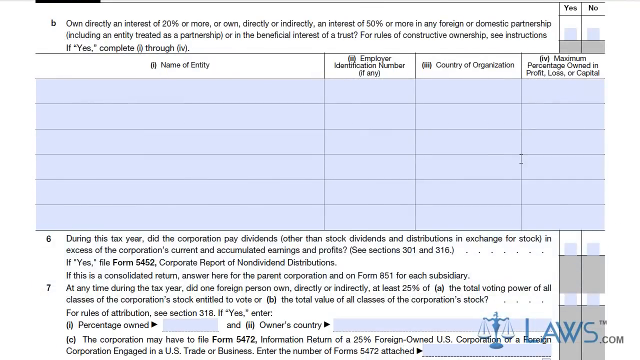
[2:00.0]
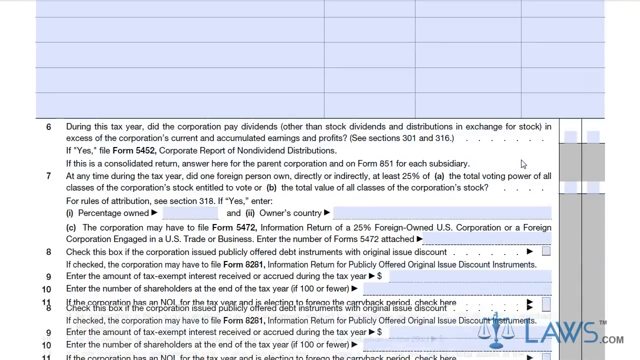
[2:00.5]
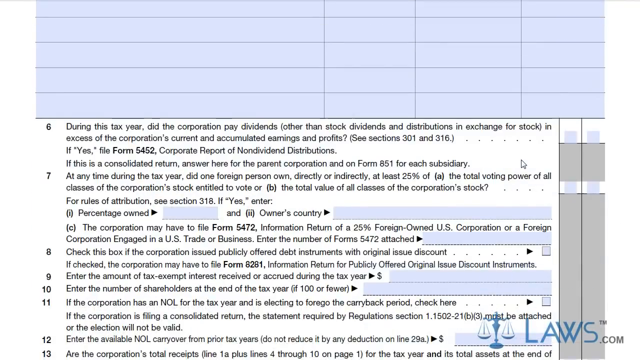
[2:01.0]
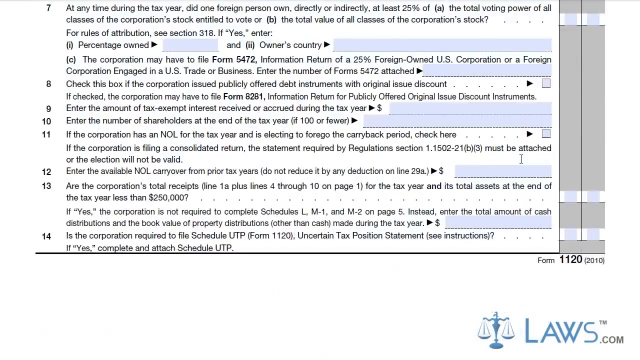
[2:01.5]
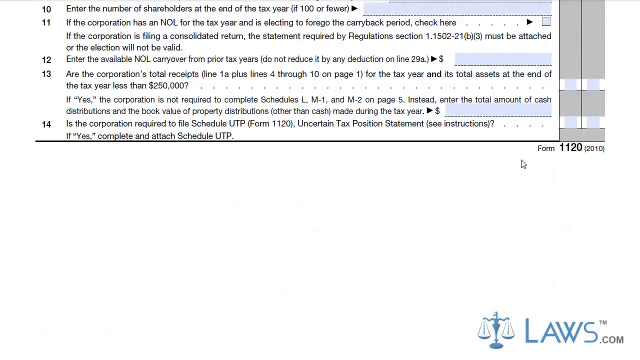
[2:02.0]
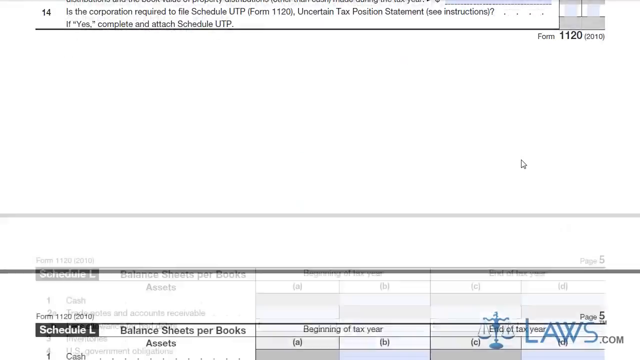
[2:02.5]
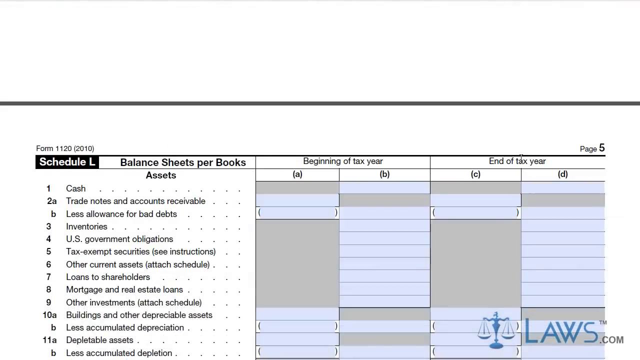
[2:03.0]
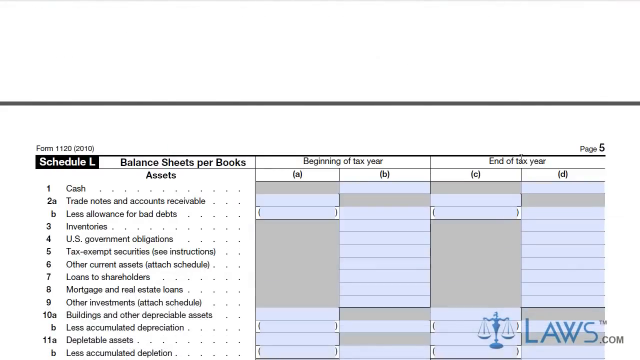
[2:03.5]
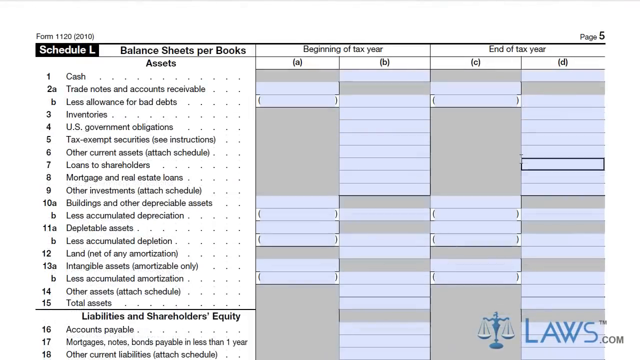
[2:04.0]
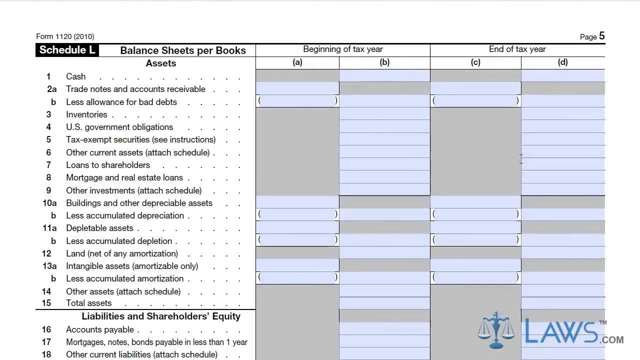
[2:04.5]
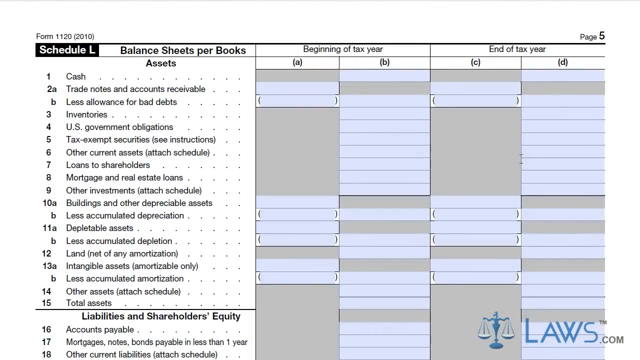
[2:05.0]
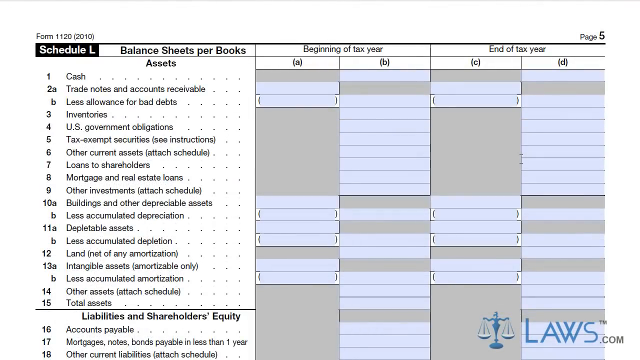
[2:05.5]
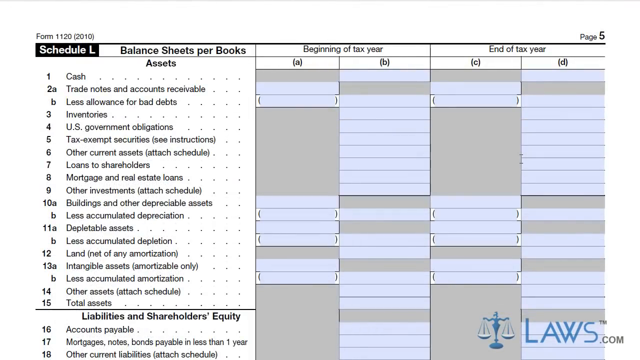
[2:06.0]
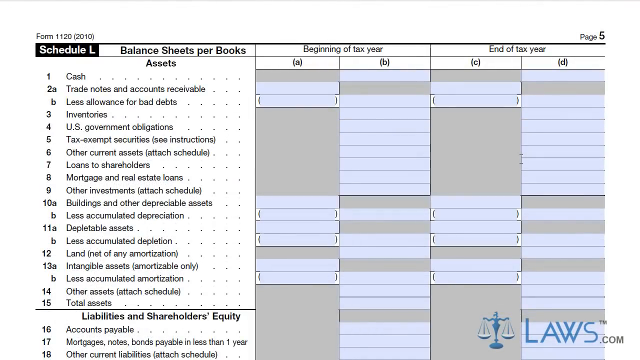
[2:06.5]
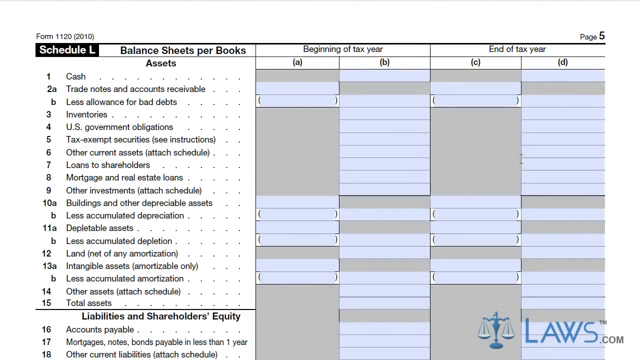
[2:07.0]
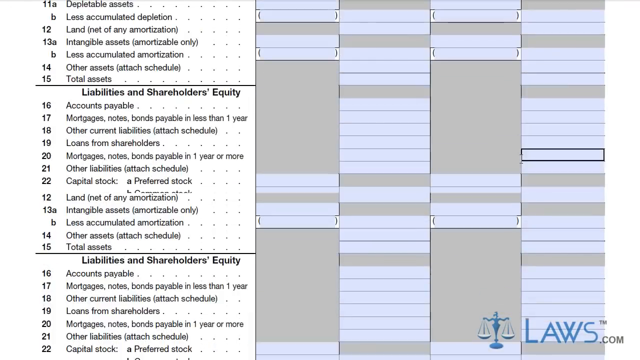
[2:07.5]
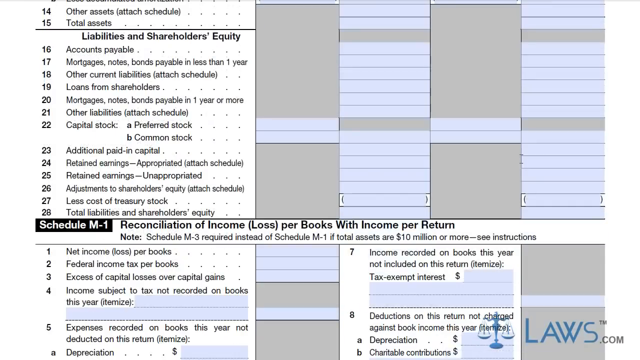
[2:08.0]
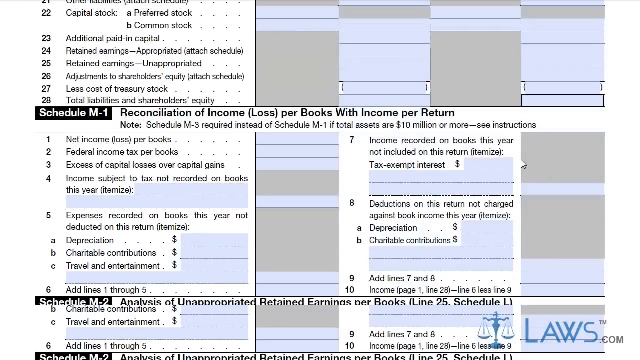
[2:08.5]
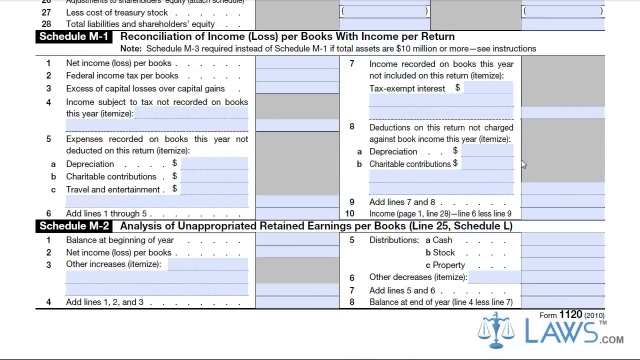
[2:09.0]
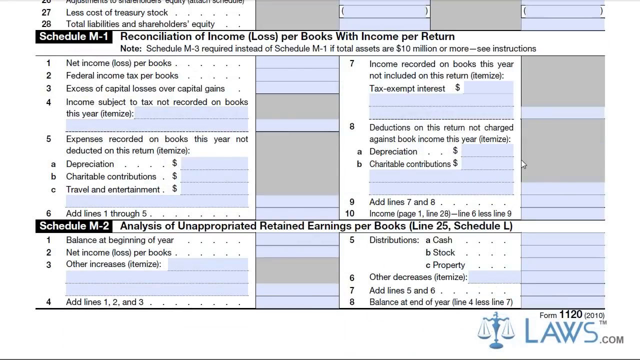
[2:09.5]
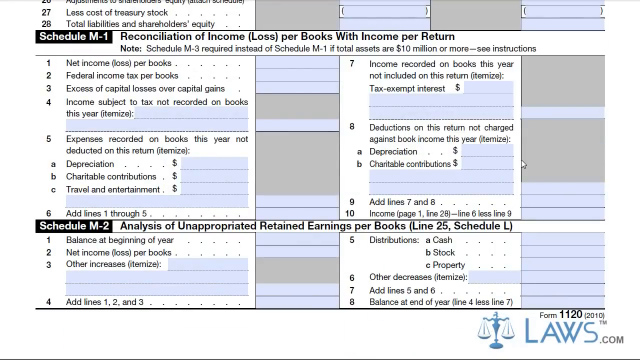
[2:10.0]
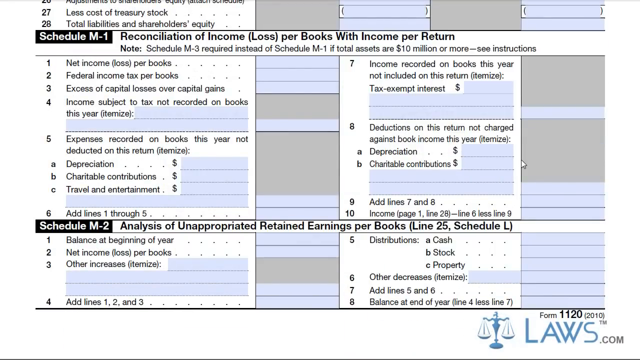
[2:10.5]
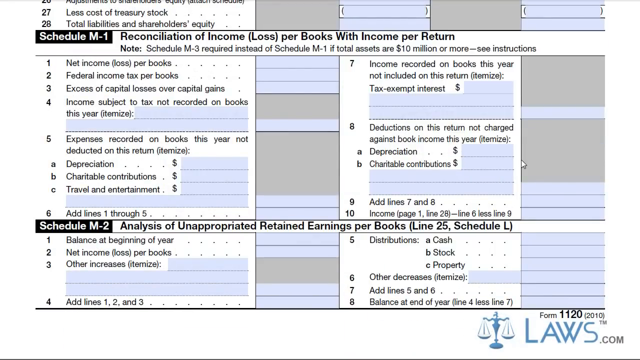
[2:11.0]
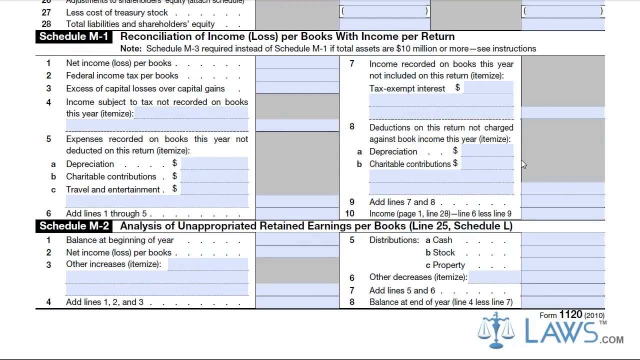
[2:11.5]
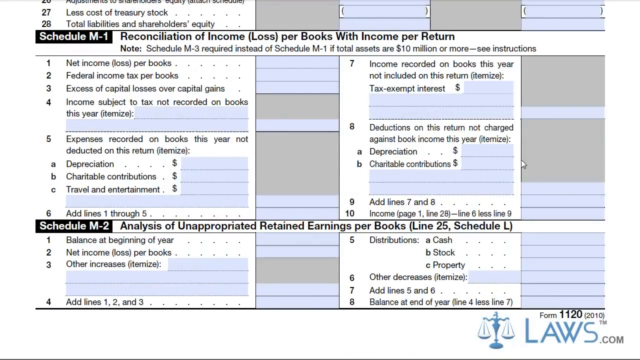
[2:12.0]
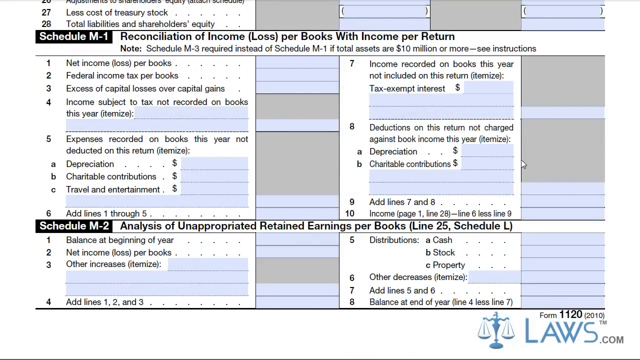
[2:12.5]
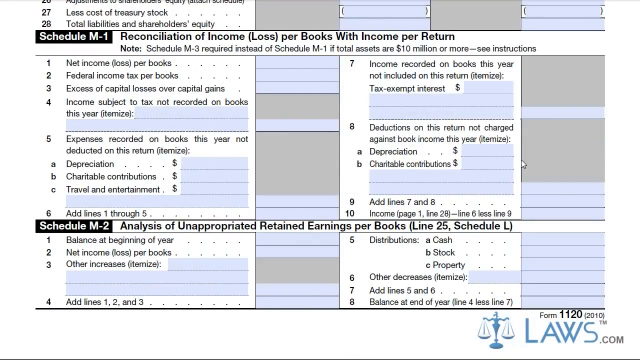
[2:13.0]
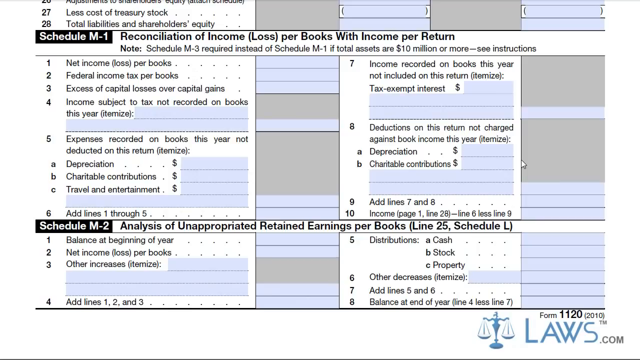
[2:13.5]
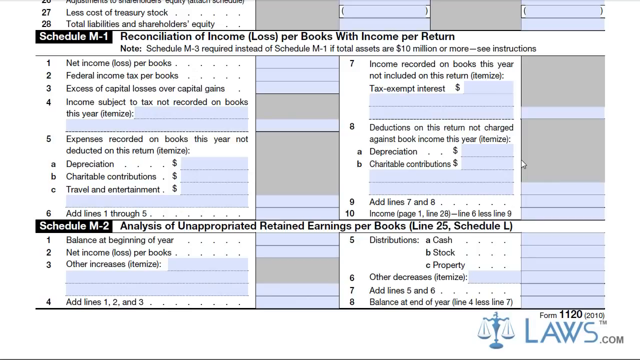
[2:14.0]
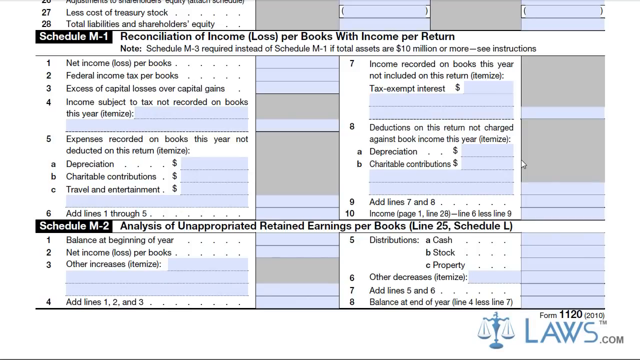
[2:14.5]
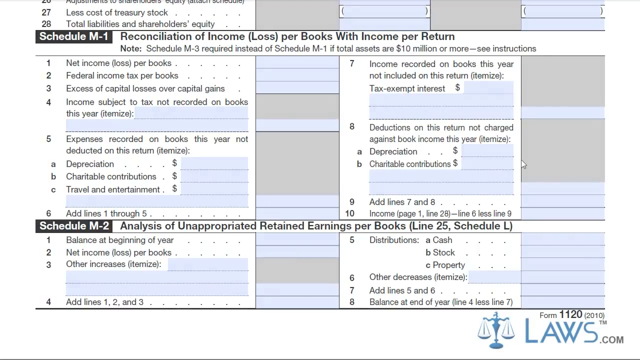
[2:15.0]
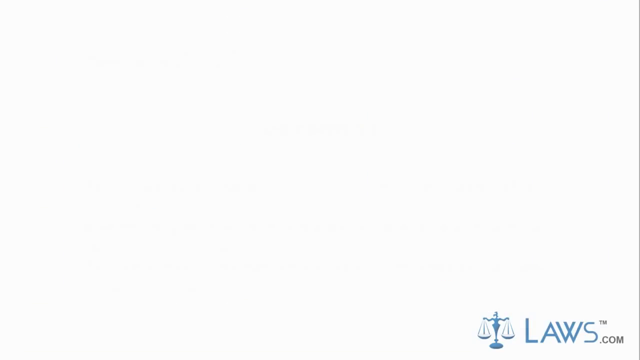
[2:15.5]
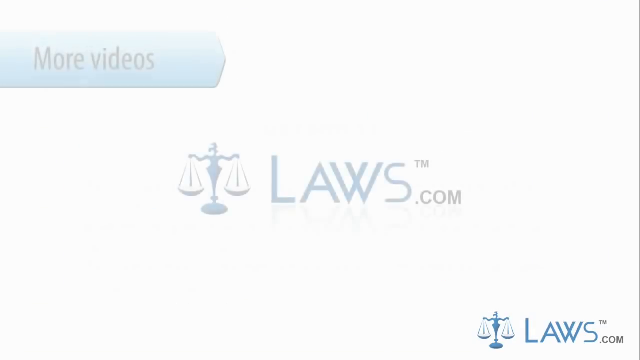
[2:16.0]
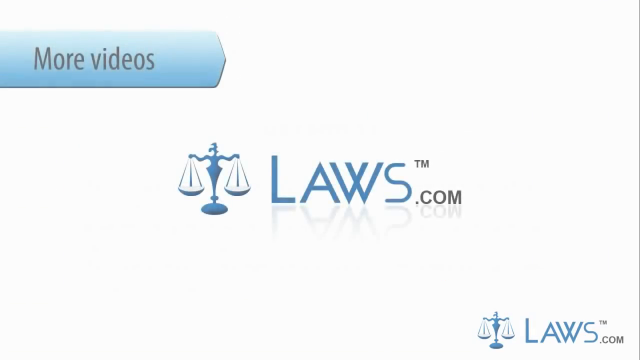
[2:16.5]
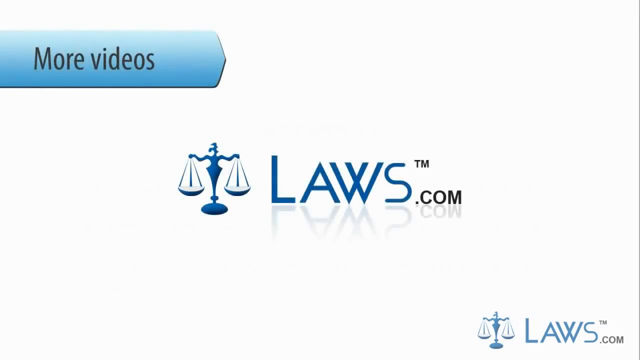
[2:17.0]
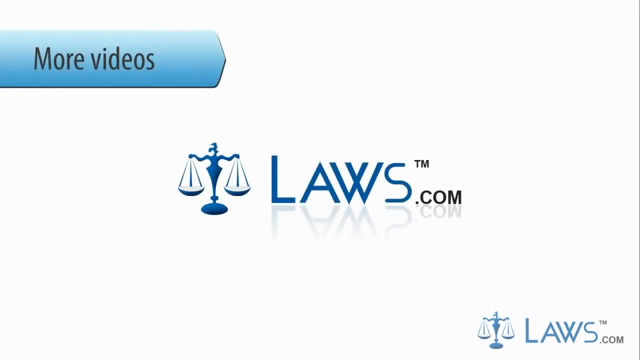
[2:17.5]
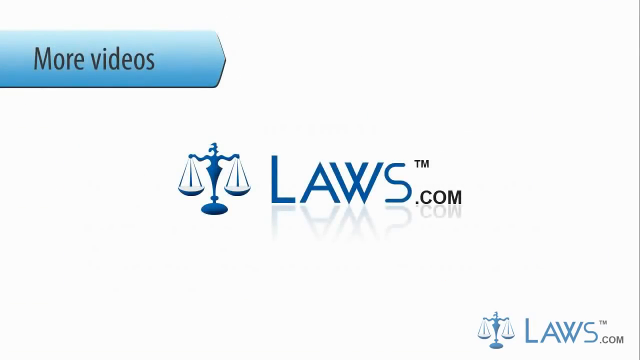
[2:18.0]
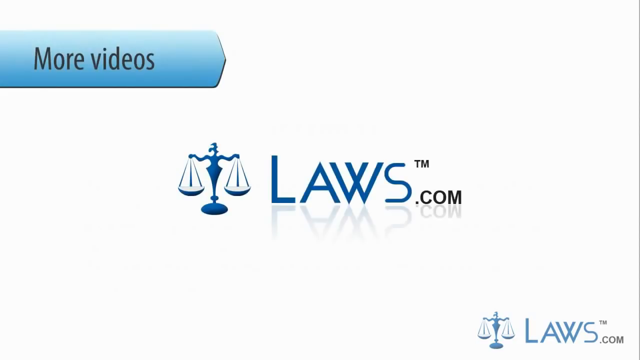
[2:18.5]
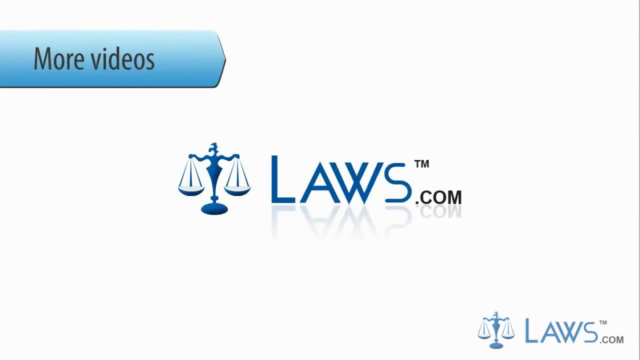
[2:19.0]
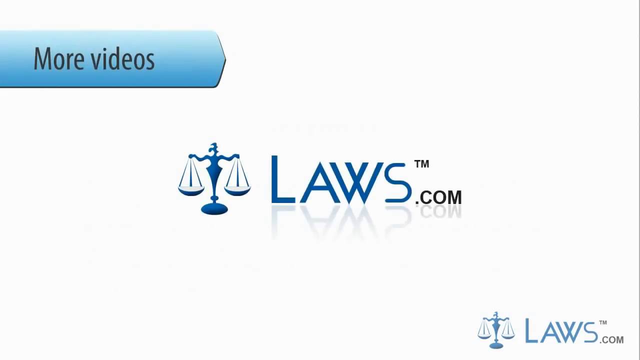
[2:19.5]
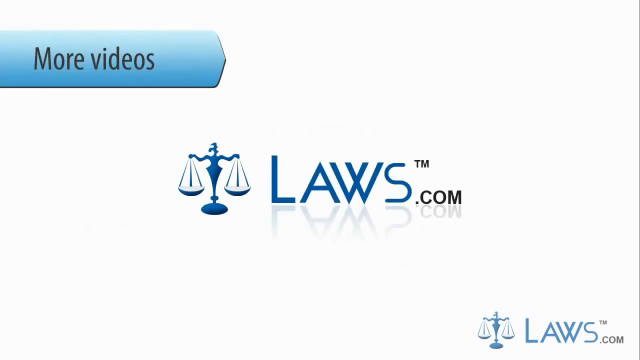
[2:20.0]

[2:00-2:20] The view moves further down Schedule K. After the name of the entities, a question asks whether during this tax year the corporation paid dividends or other distributions in exchange for stock in excess of the corporation's current or accumulated earnings and profits, referring to form 5452, Corporate Report of Non-Dividend Distributions, with a note for consolidated returns to answer for the parent corporation and on form 851. Another question asks whether at any time during the tax year one foreign person owned directly or indirectly at least 25% of the total voting power or total value of all classes of the corporation's stock, noting the corporation may have to file form 5472, information return of a foreign-owned U.S. corporation or foreign corporation engaged in a U.S. trade or business, and to enter the number of forms 5472 attached. Further items read: check this box if the corporation issued publicly offered debt instruments with original issue discount, and if checked the corporation may have to file form 8281, information return for publicly offered original issue discount instruments; enter the amount of tax-exempt interest received or accrued during the tax year; and enter the number of shareholders at the end of the tax year.